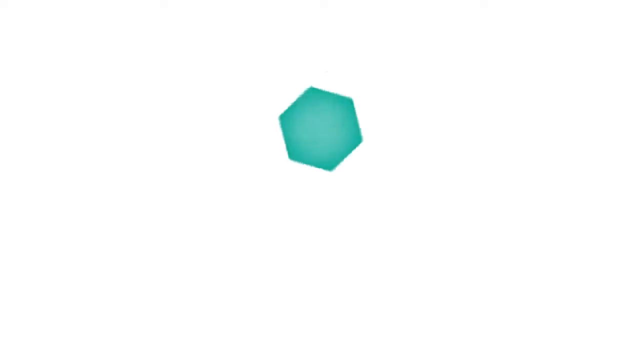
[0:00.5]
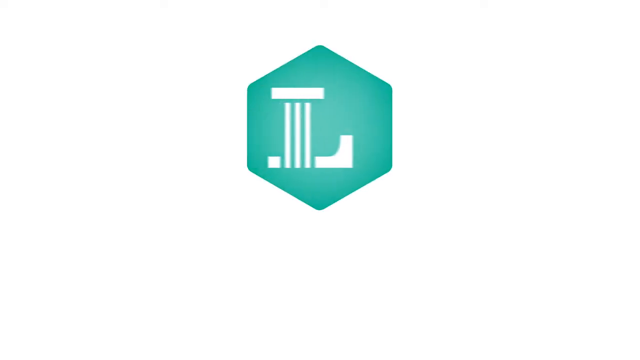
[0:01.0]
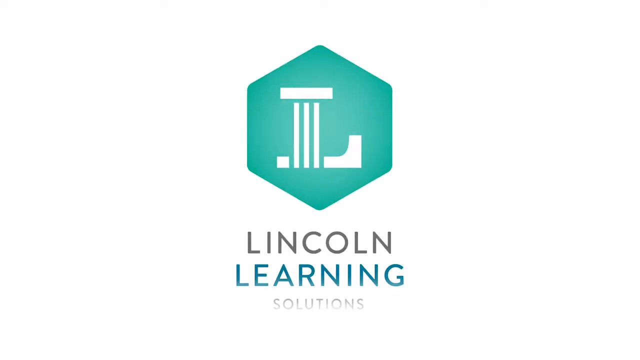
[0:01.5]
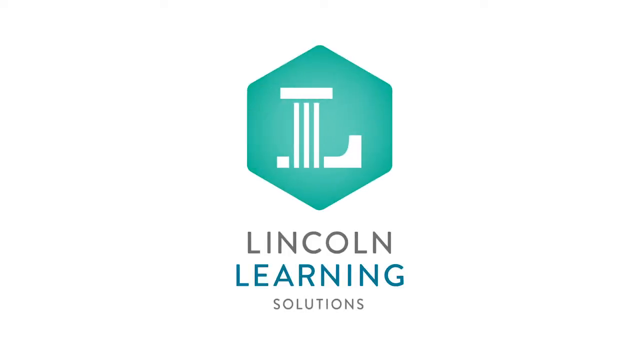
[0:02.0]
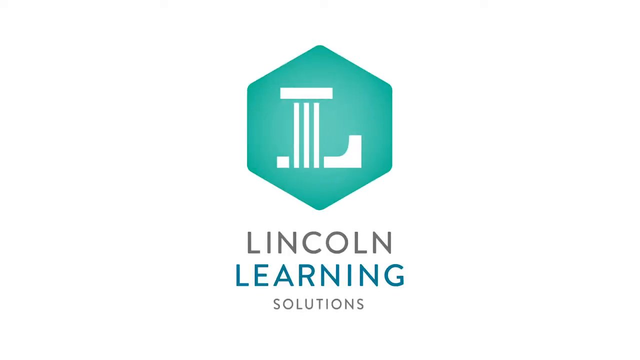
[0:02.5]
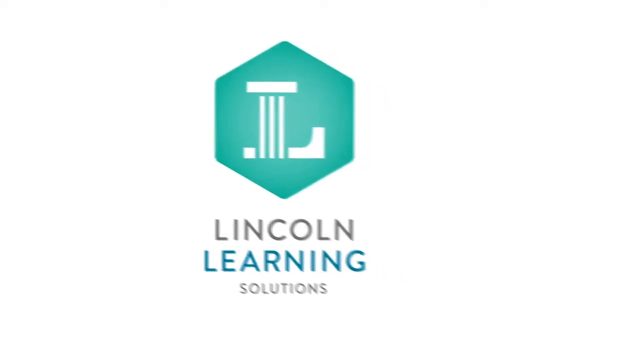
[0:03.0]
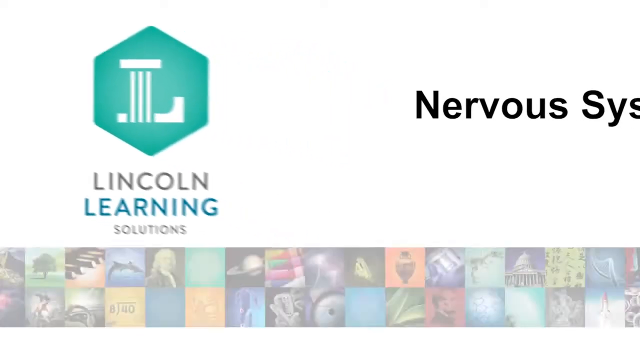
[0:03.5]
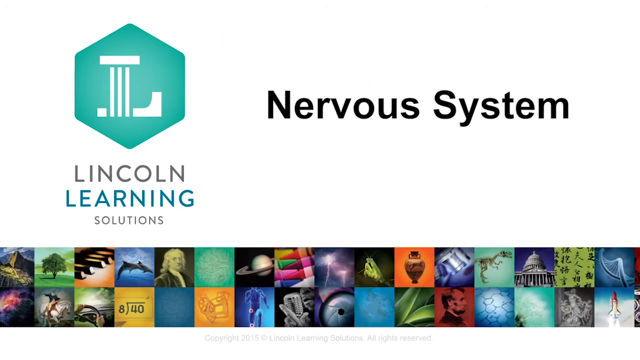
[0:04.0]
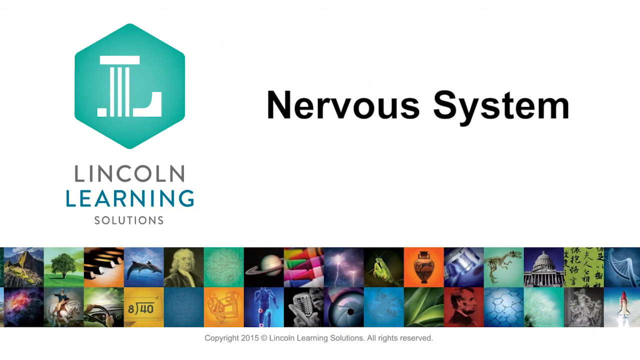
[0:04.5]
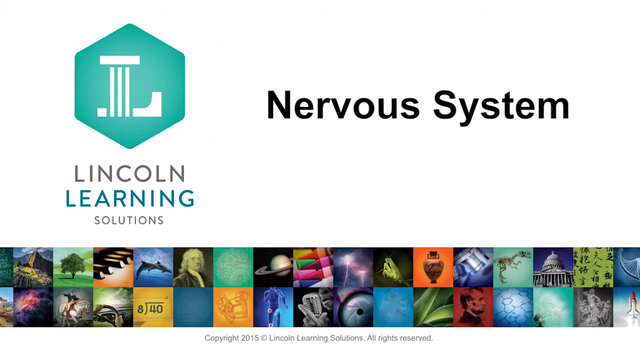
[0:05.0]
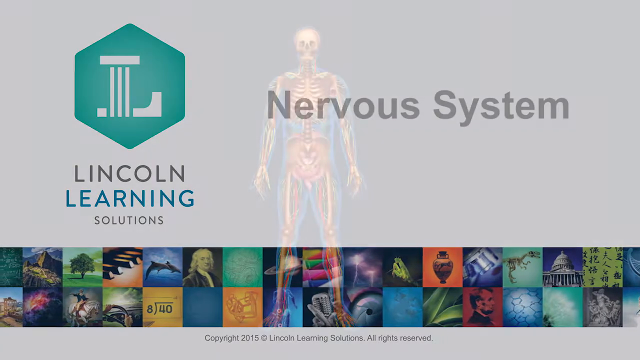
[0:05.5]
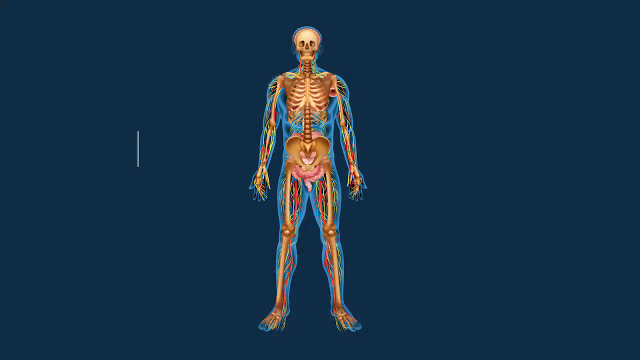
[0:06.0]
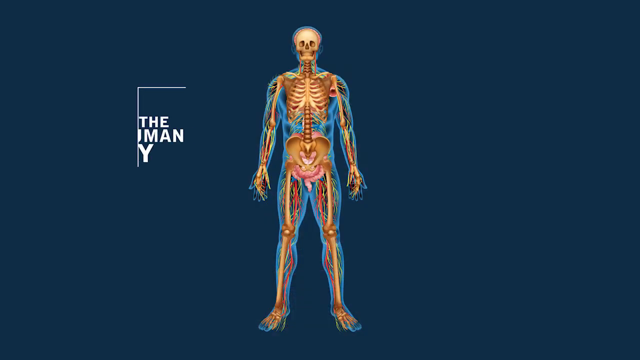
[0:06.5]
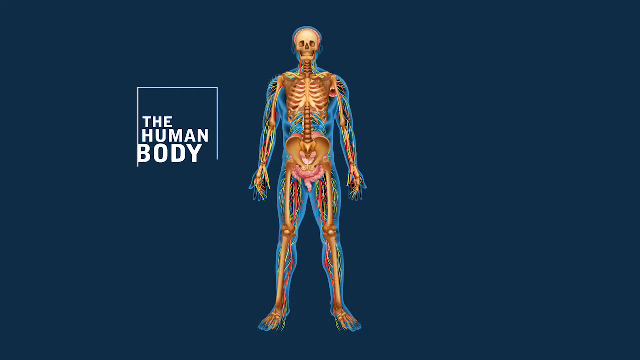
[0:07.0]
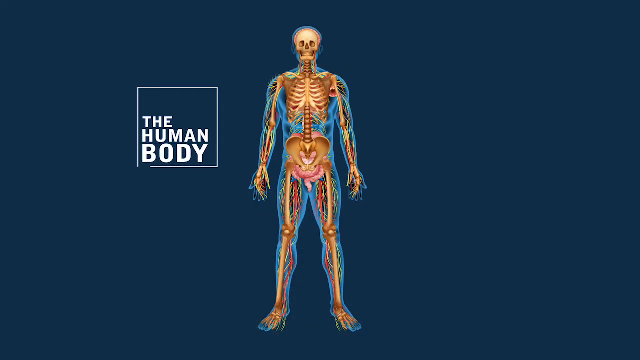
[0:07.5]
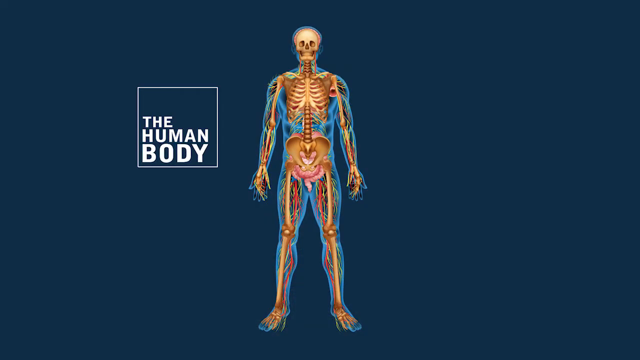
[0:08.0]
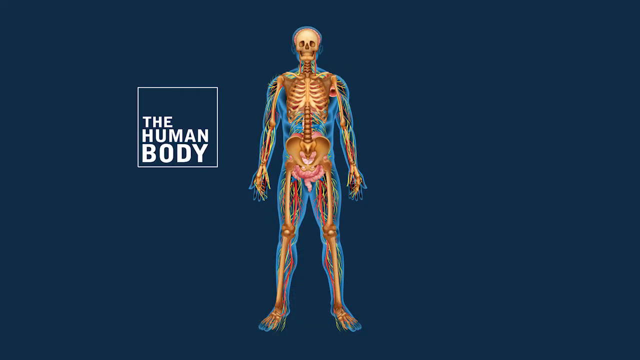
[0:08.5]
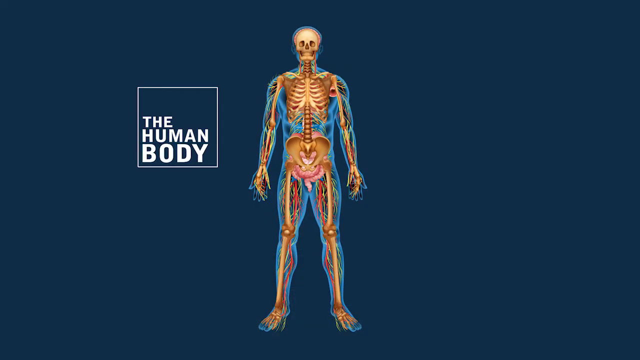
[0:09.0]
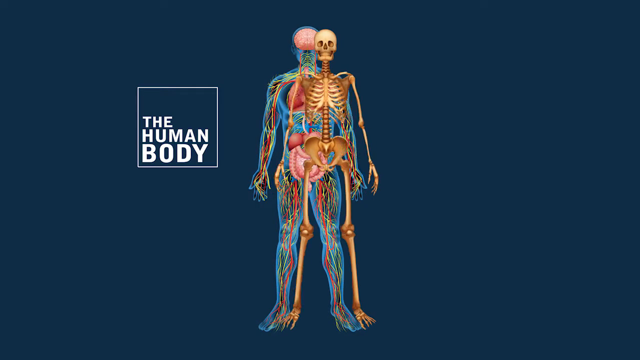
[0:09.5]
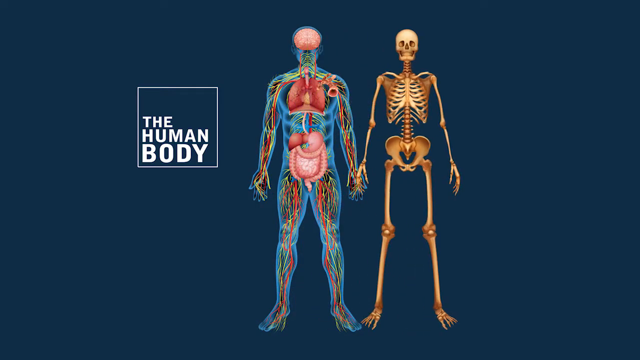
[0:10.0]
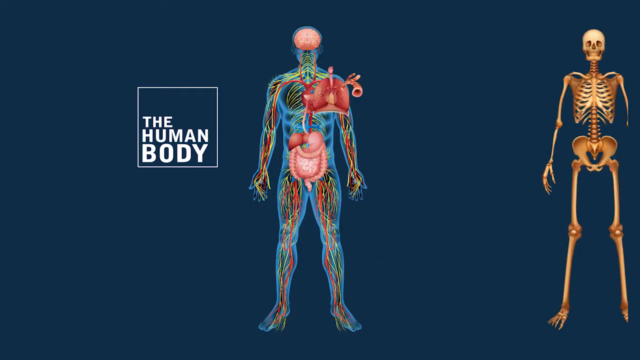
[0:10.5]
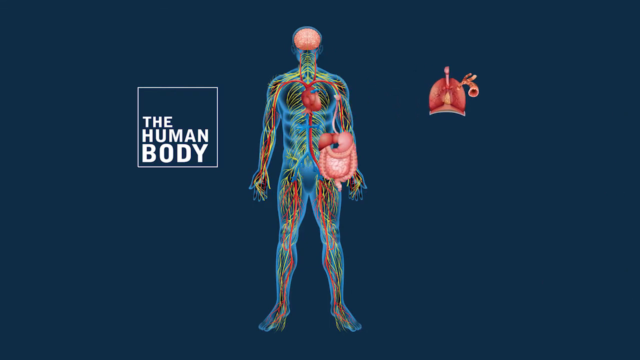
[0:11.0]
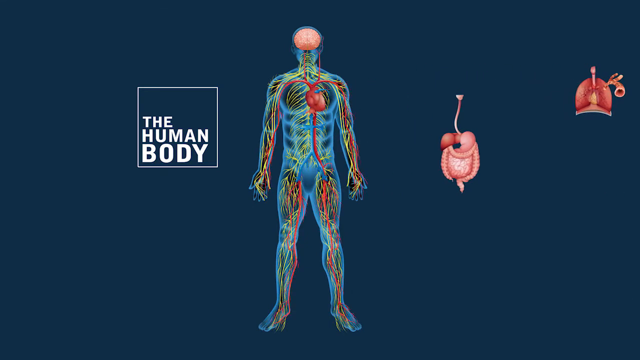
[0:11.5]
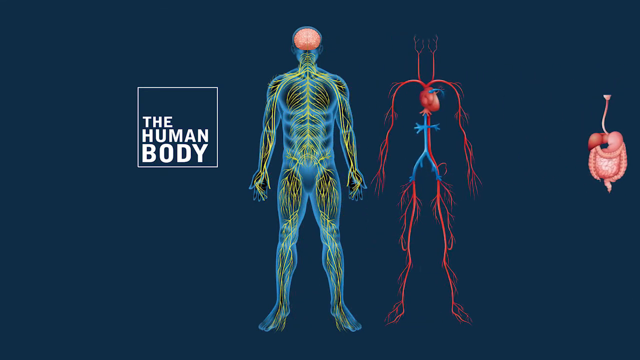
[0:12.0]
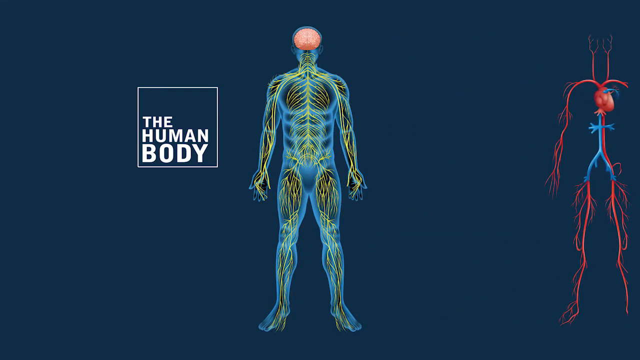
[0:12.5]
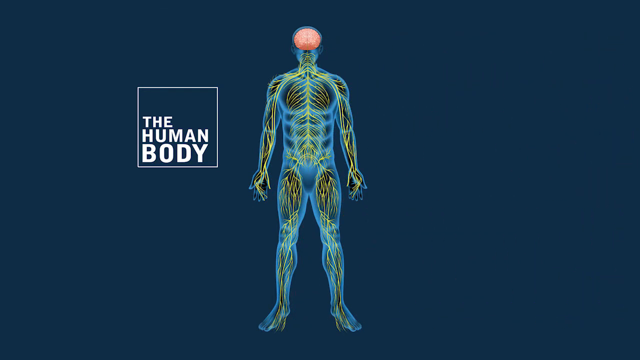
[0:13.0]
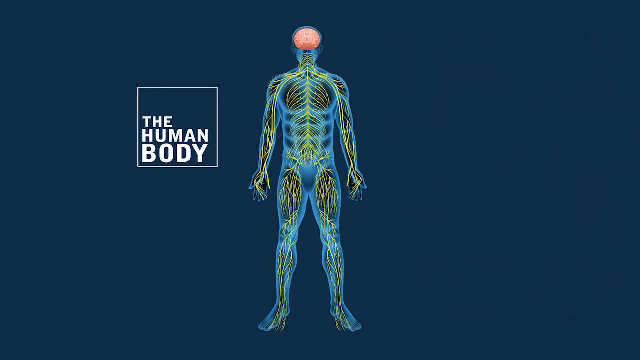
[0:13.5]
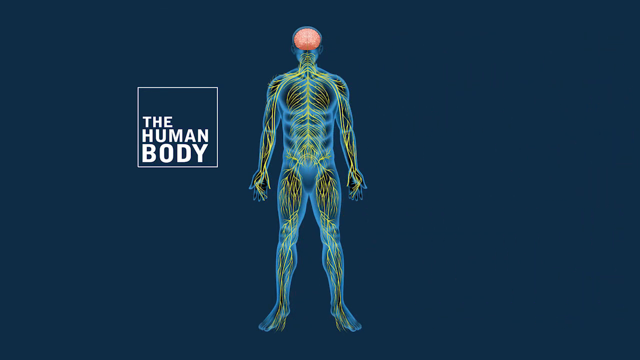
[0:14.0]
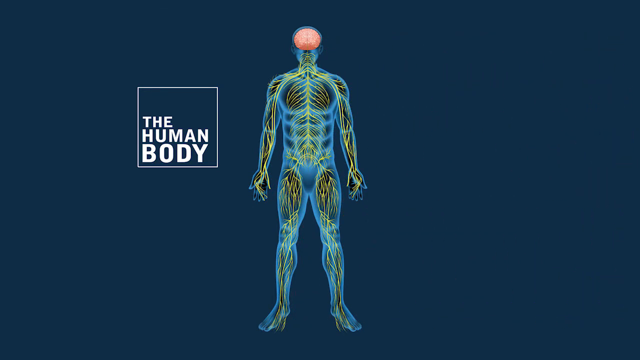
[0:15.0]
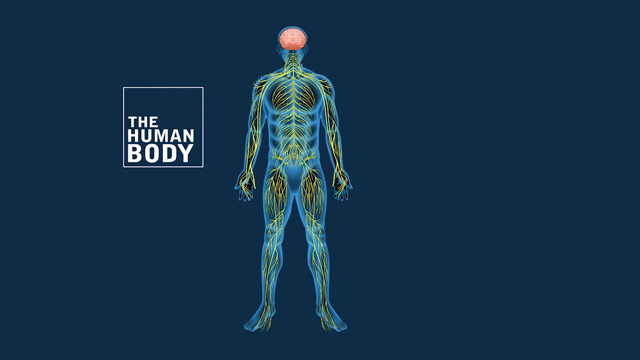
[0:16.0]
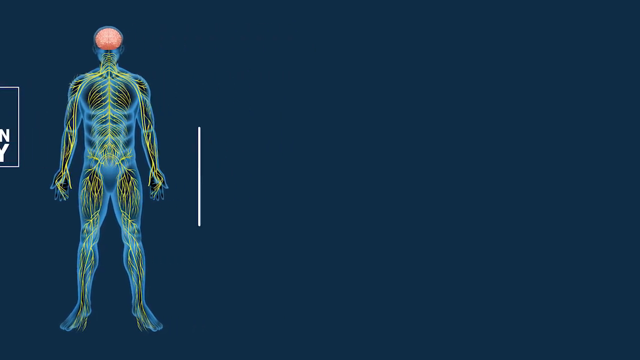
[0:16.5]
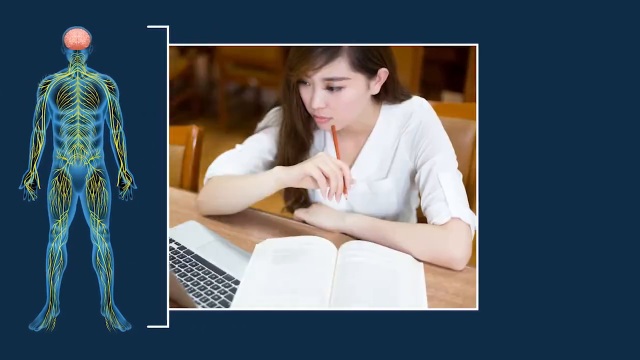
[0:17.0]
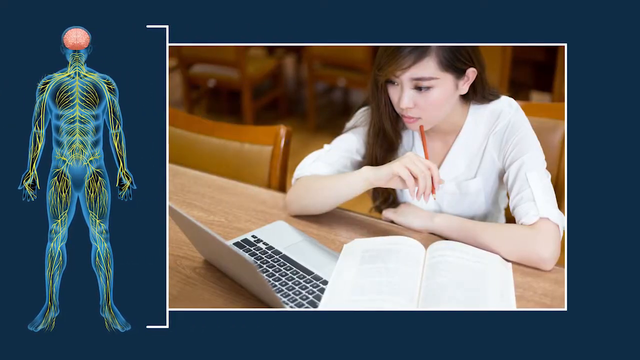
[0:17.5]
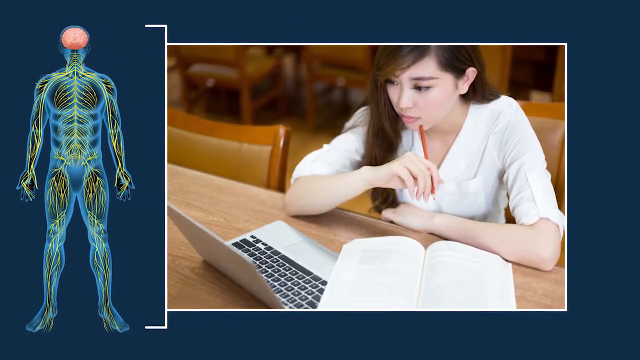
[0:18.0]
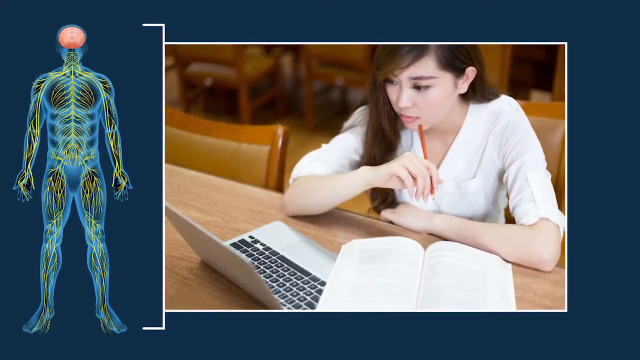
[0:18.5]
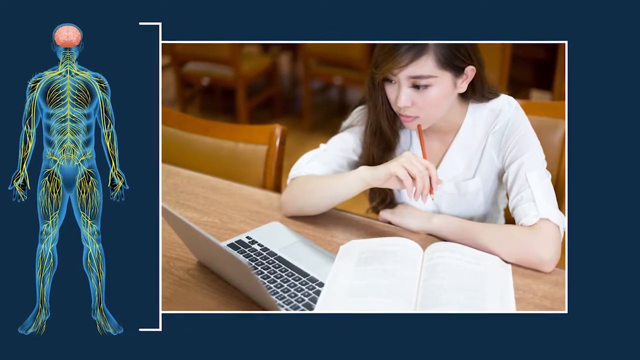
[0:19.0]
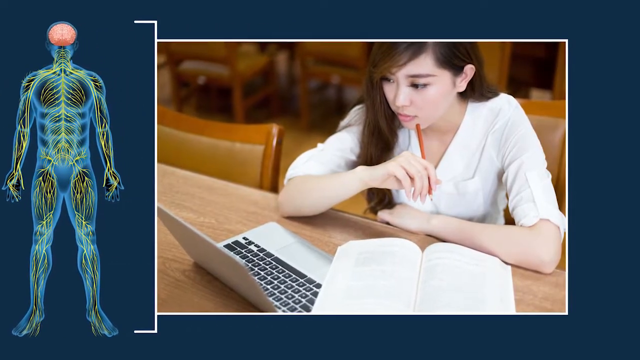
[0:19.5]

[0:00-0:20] The video opens with "Lincoln Learning Solutions" in the bottom central section of the frame. On the next screen, the Lincoln Learning Solutions logo moves to the upper left of the screen. To its right, "nervous system" appears in black writing, and below that are two grids, each containing many images. A different image follows, with a deep blue background and a skeleton standing with its arms down by its sides. To the left of the skeleton is a white-bordered box that reads "the human body". The skeleton then comes out of the human body form toward the right of the screen, so the skeleton's bones are visible on their own, while the skin and all the organs remain on the left-hand side. The skeleton disappears completely off the right side of the screen. The body on the left moves to the very left edge, and a square box appears showing a picture of a laptop on a desk with a notebook. A woman with long brown hair, wearing a white top and holding an orange pen, faces the laptop.